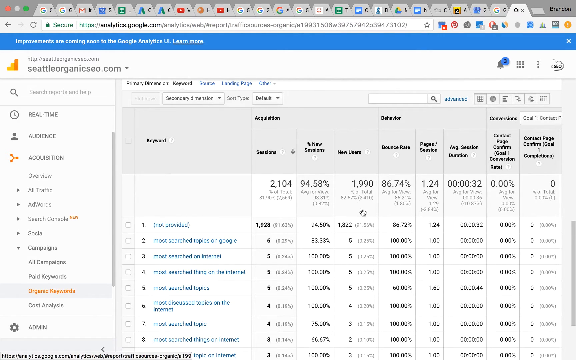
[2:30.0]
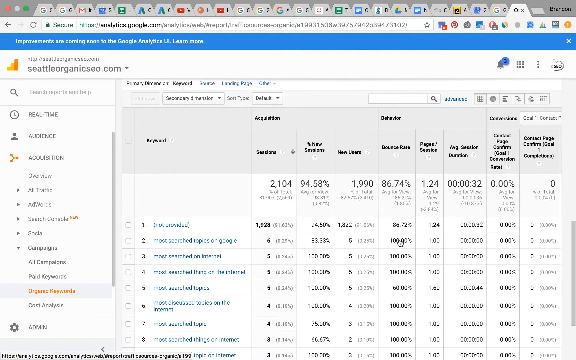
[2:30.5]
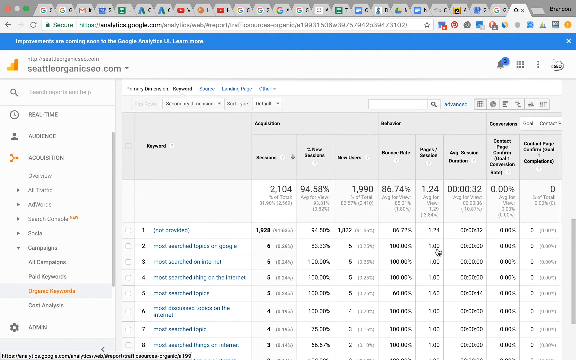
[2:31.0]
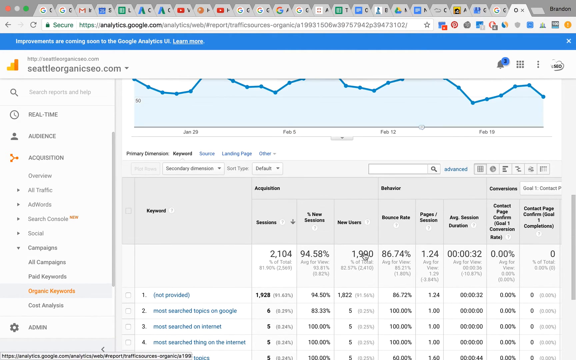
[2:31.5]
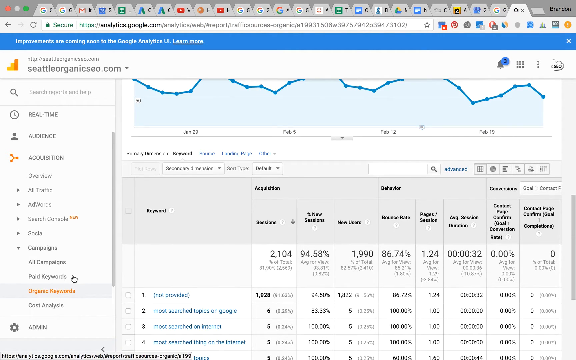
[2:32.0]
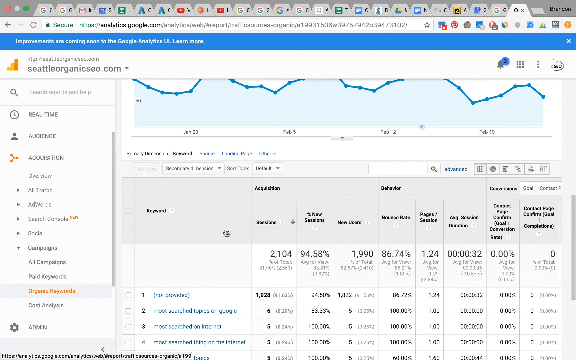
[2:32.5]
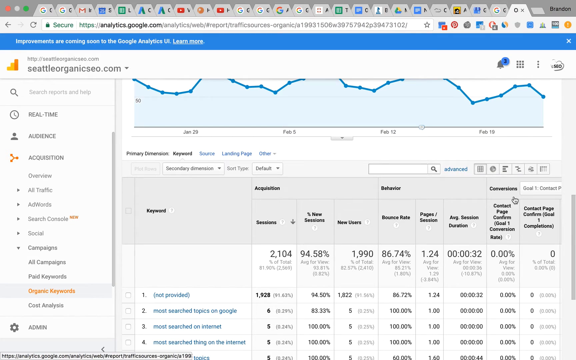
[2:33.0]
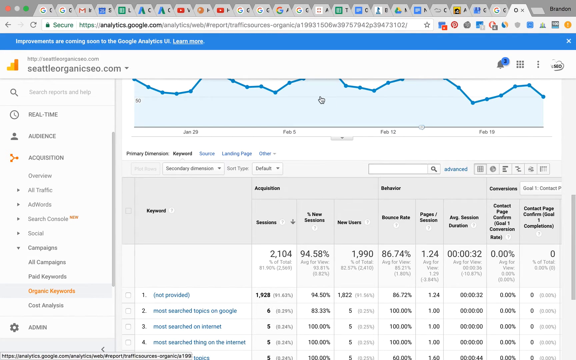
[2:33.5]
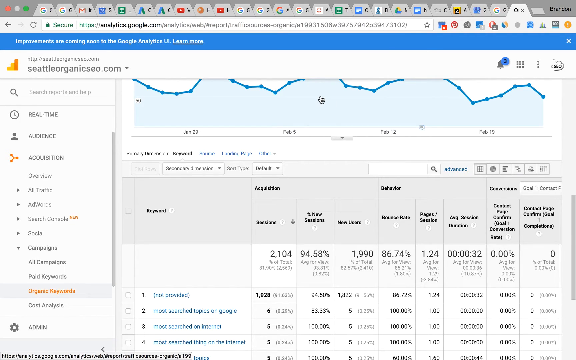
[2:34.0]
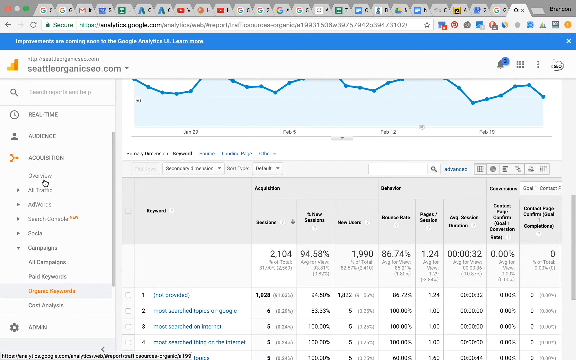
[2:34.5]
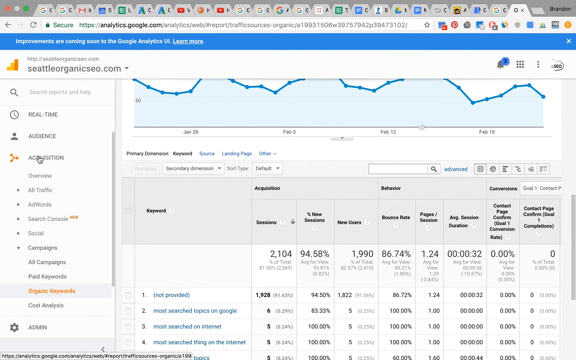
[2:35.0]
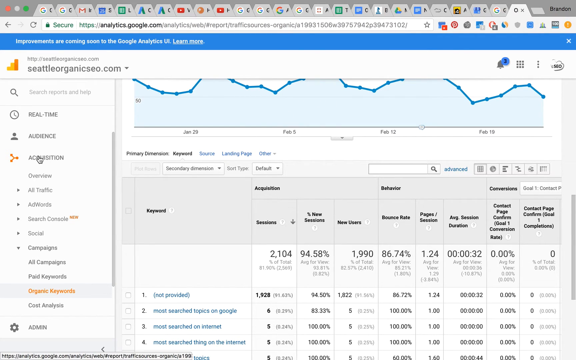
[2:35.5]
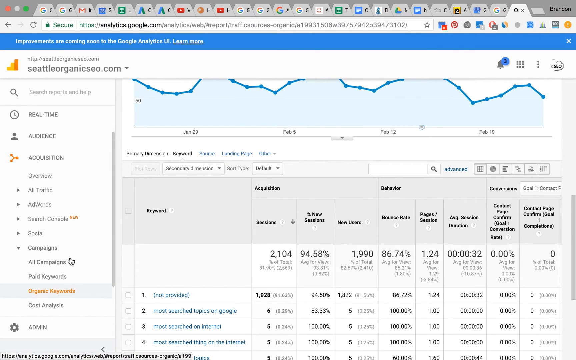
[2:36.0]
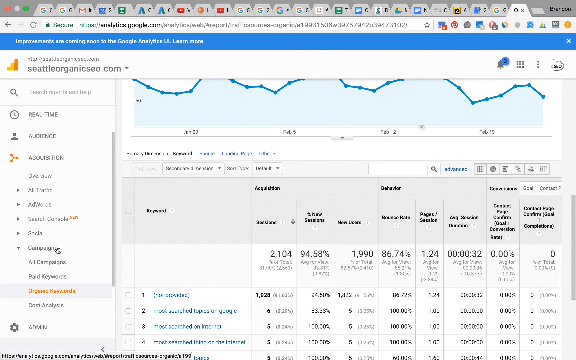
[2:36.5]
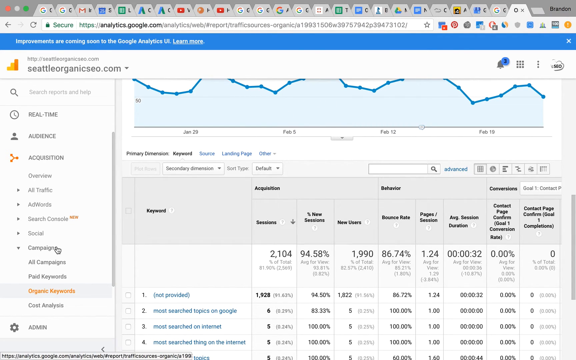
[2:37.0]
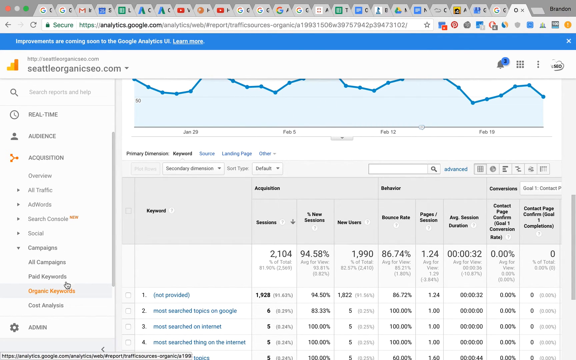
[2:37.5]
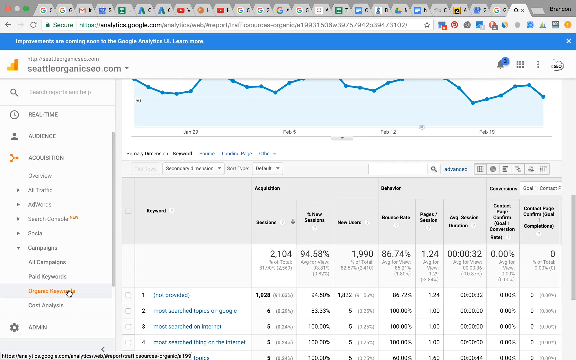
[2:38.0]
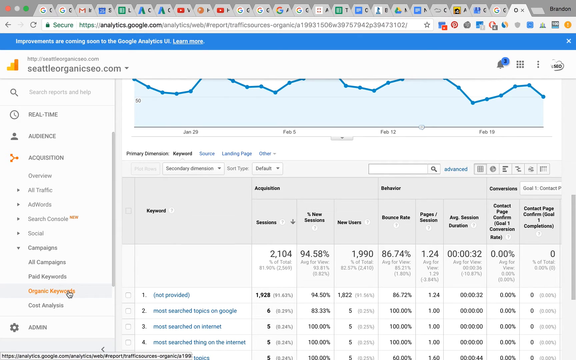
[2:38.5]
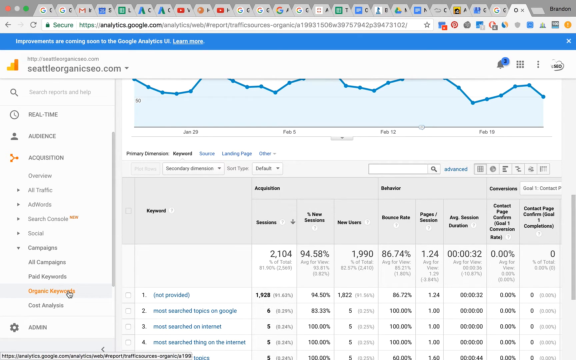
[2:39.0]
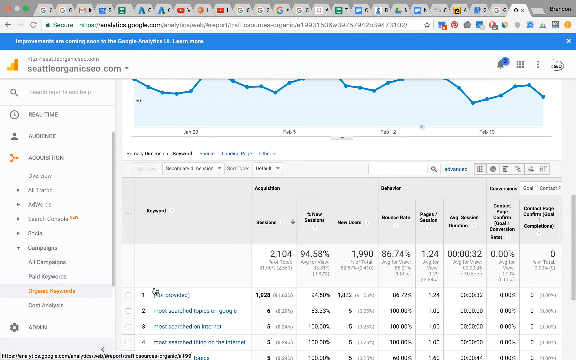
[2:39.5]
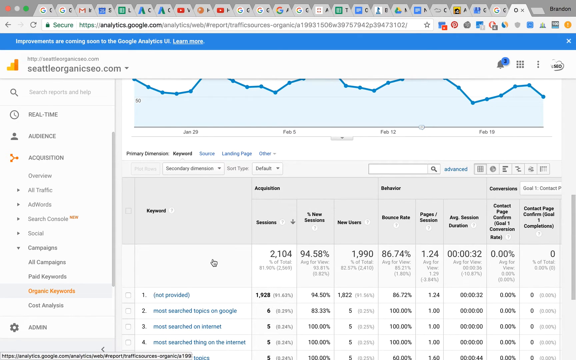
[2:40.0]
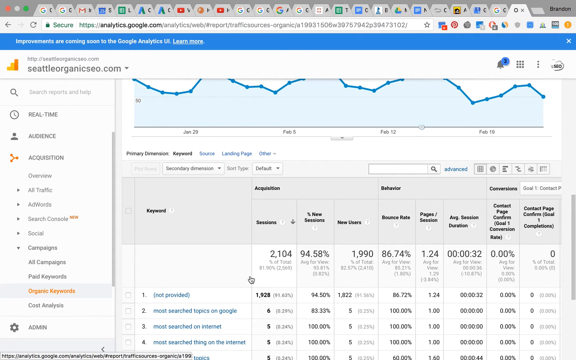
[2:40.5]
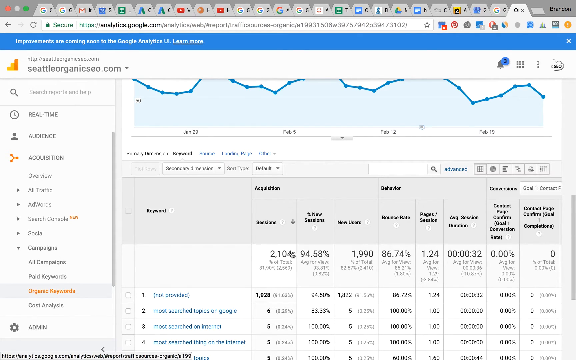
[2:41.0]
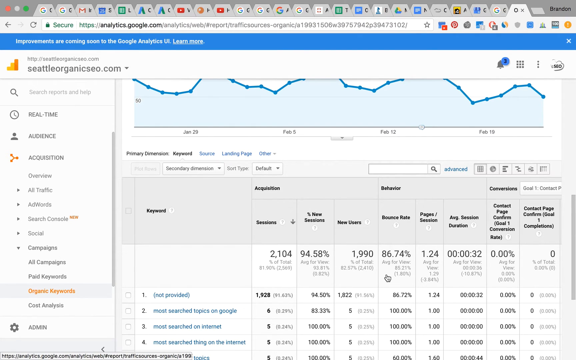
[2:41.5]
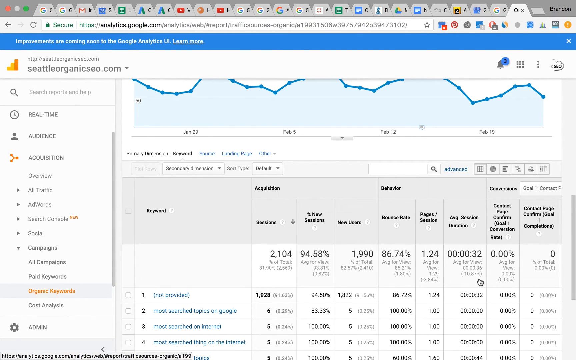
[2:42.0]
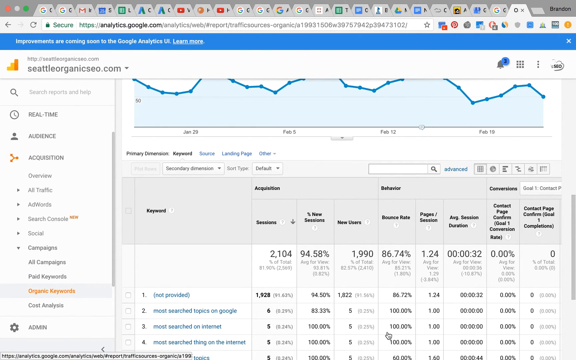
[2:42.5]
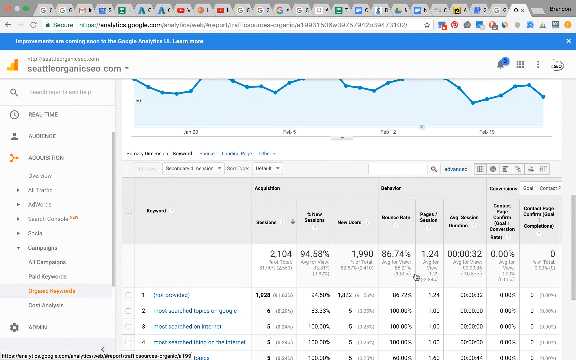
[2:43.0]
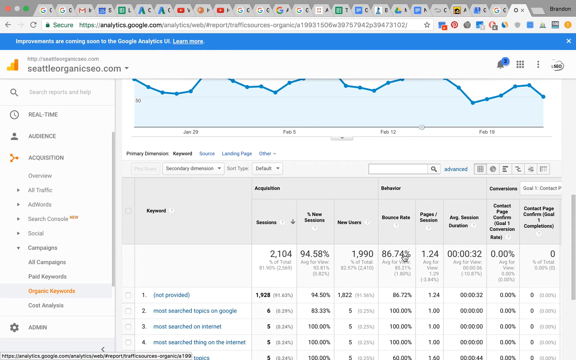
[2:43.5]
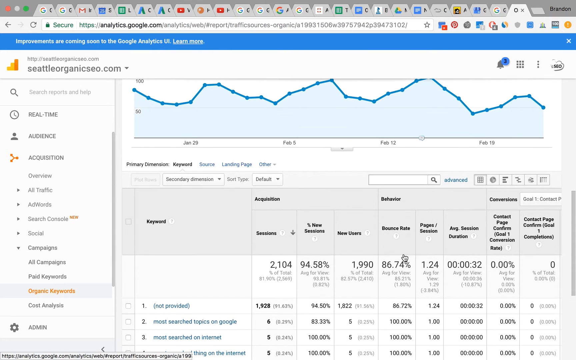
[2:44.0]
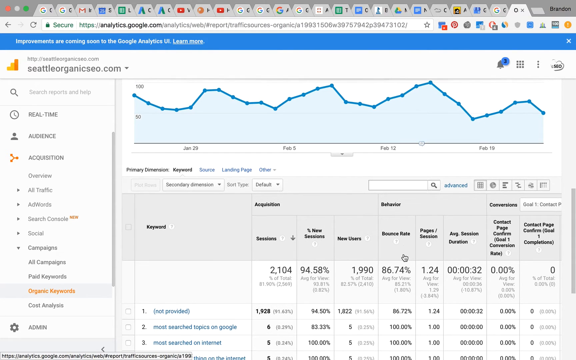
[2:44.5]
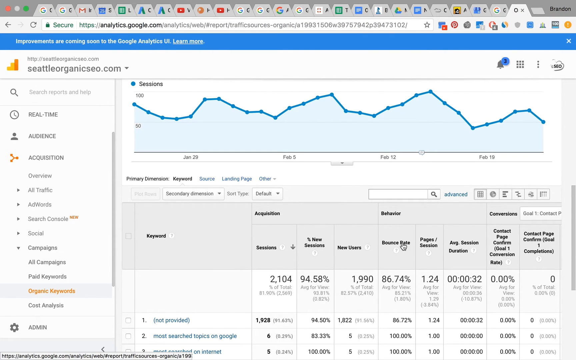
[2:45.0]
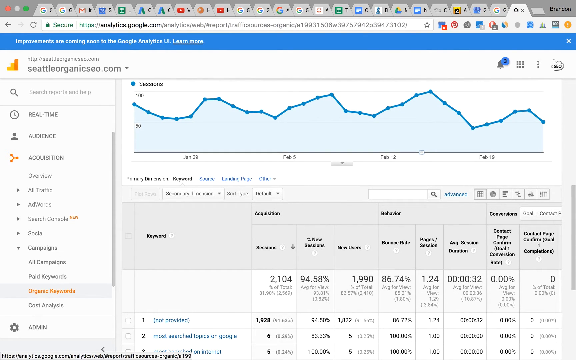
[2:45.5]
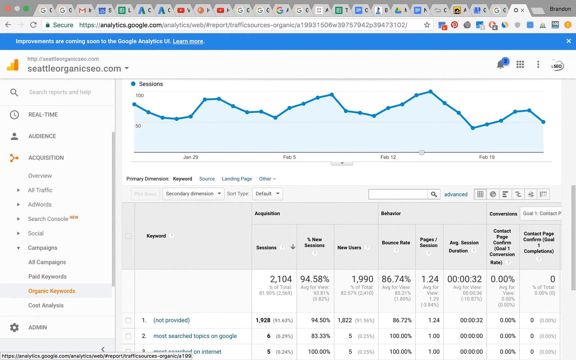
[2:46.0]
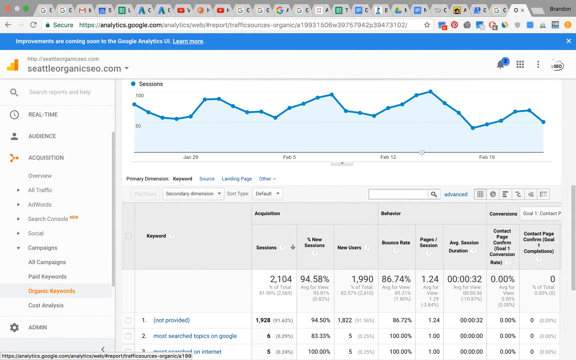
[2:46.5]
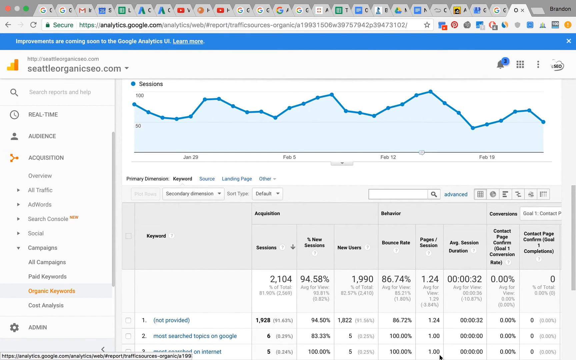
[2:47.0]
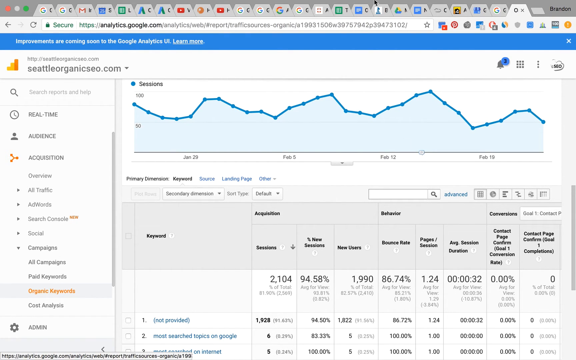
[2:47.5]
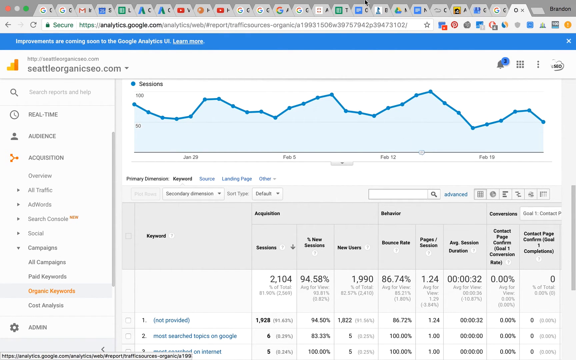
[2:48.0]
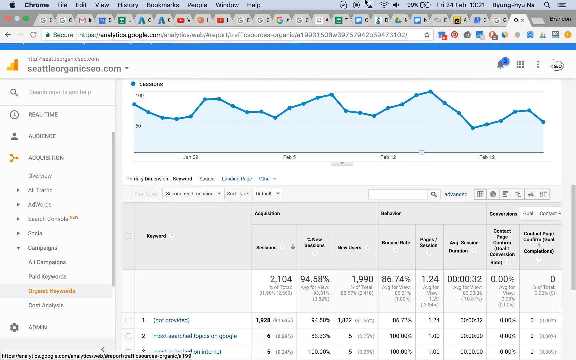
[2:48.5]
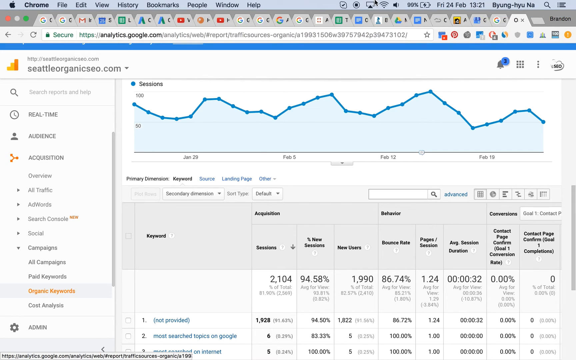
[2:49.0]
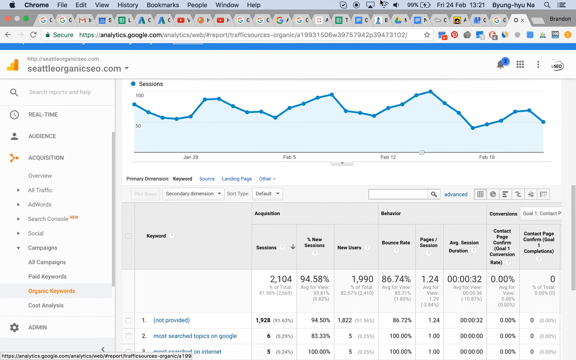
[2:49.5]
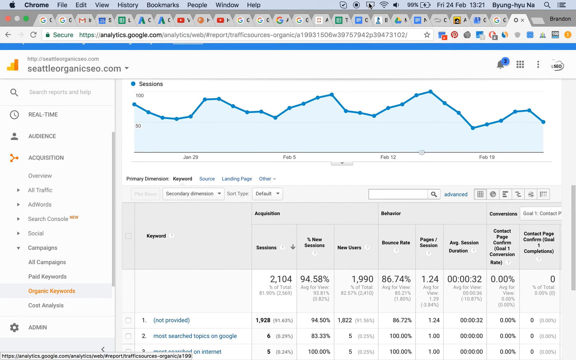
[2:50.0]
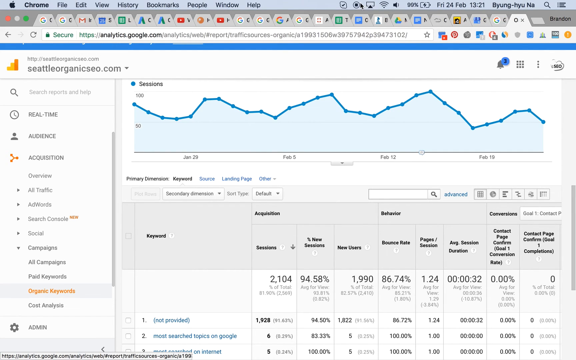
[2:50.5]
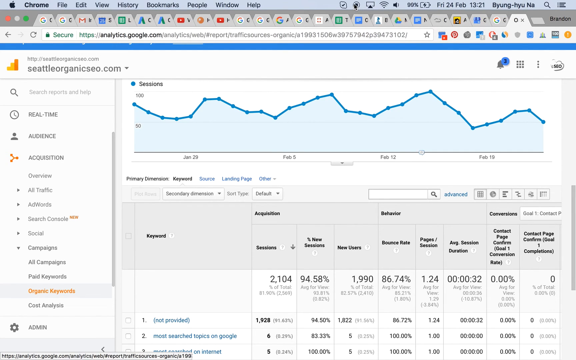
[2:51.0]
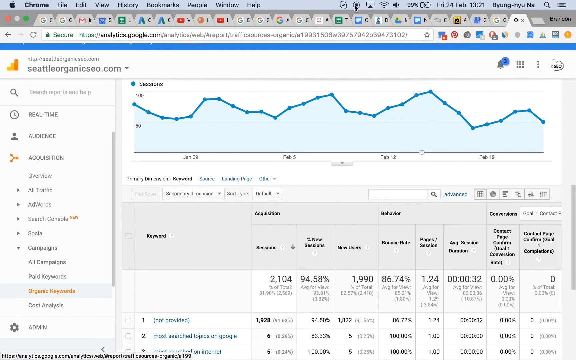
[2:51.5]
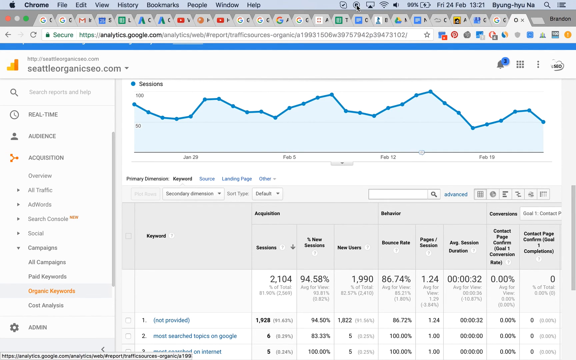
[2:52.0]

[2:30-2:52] On the screen, a pointer-finger hand cursor scrolls up and down through sections about the most searched topics on the internet. A blue line graph at the top of the screen says "sessions" and looks somewhat like a wave, going up and down with curves and pointy spots; the many numbers in the bottom section are probably the same data. On the left side there is a search area, followed by "audience", "acquisition", "overview" and "all traffic", with the menu continuing down the left side.